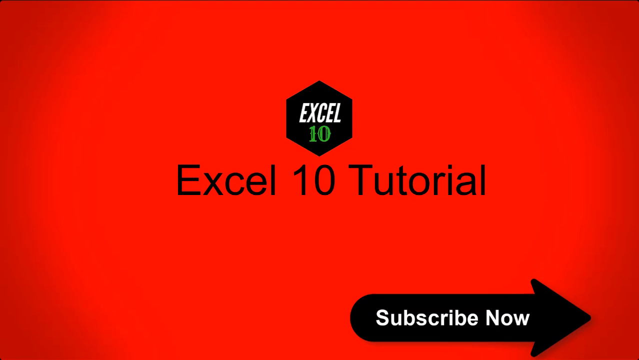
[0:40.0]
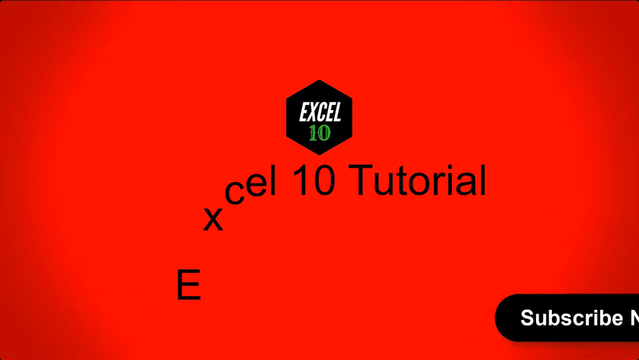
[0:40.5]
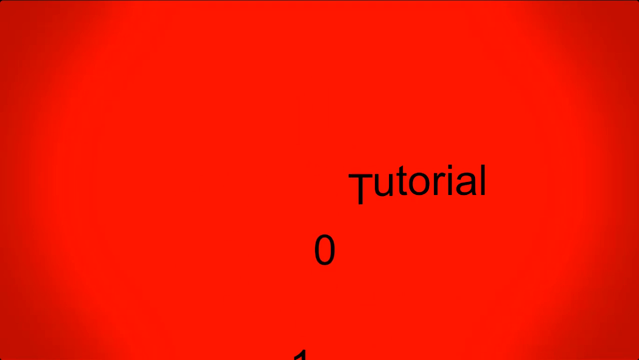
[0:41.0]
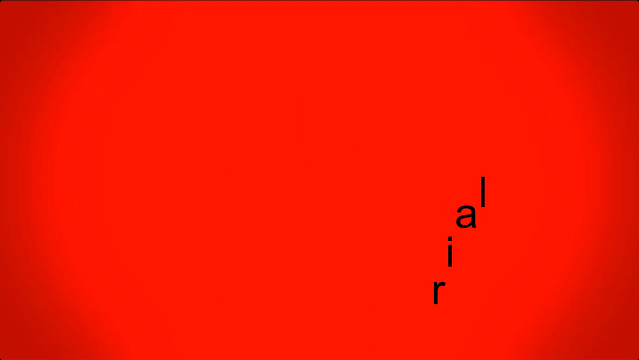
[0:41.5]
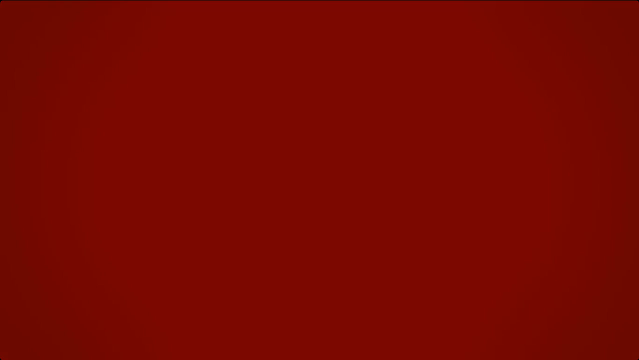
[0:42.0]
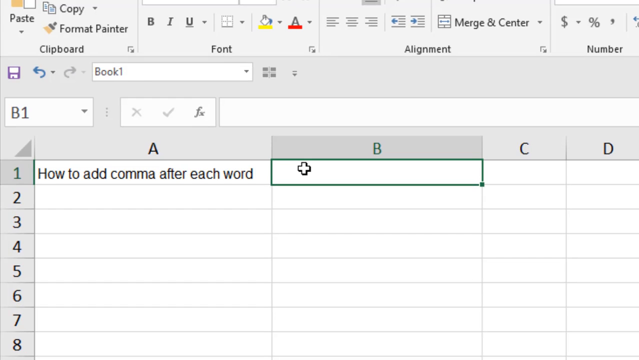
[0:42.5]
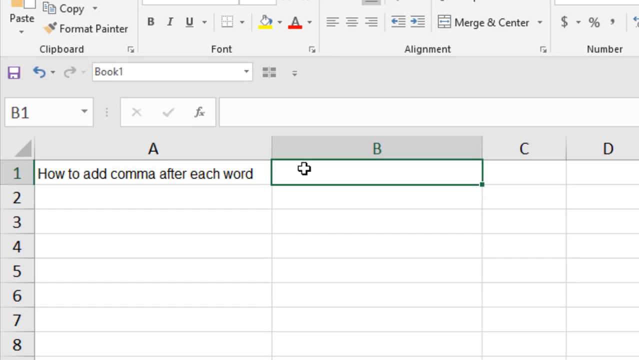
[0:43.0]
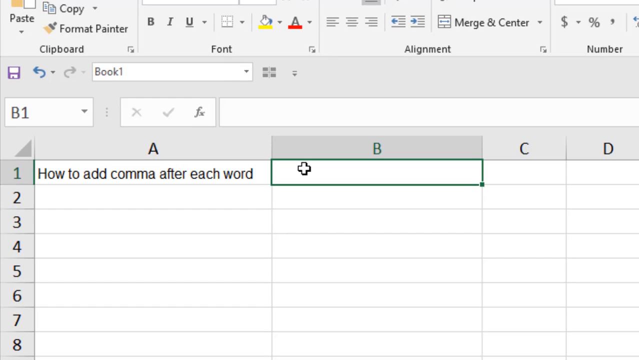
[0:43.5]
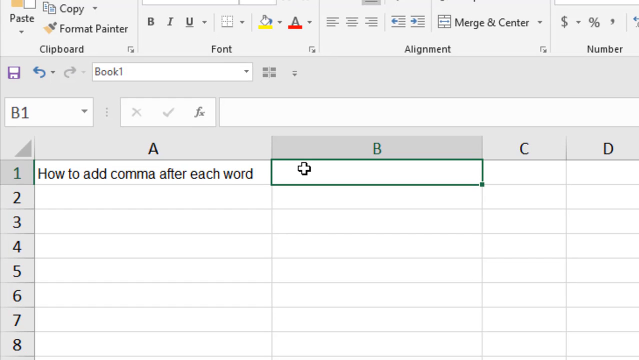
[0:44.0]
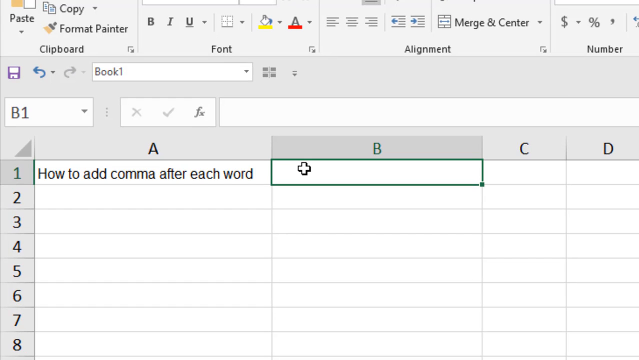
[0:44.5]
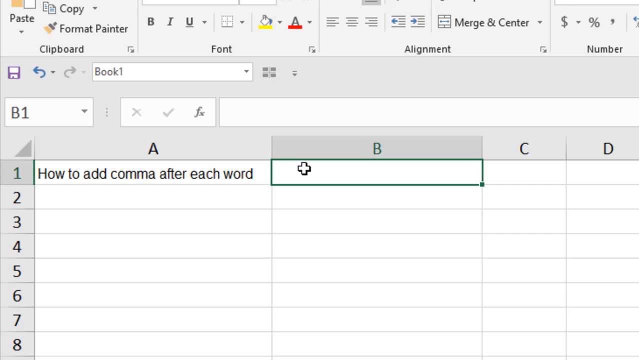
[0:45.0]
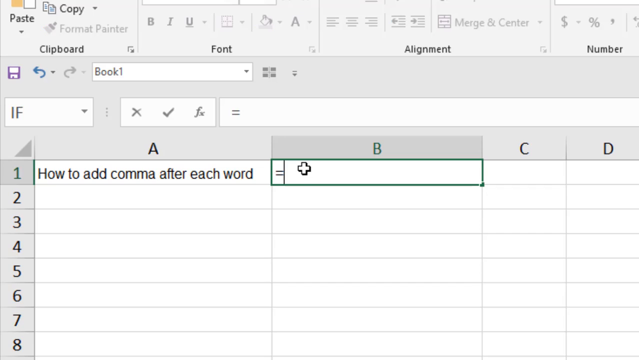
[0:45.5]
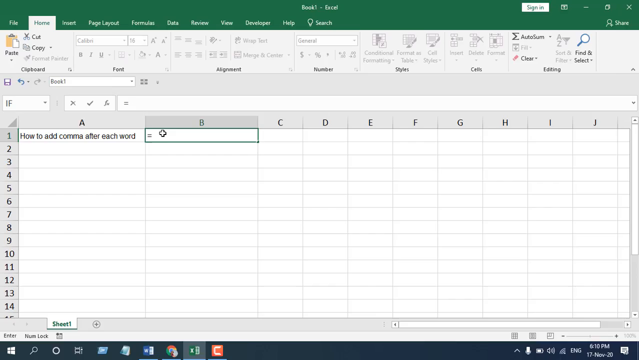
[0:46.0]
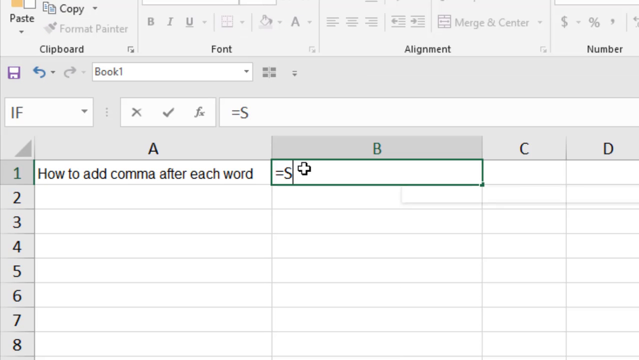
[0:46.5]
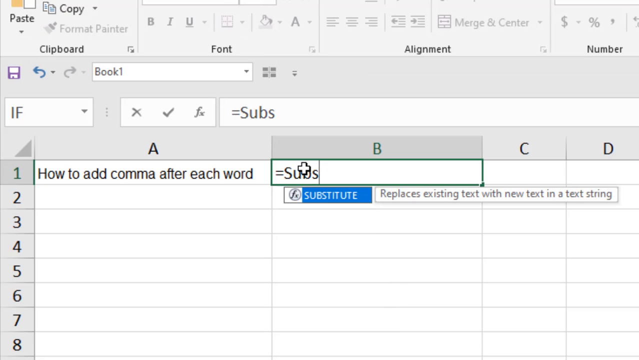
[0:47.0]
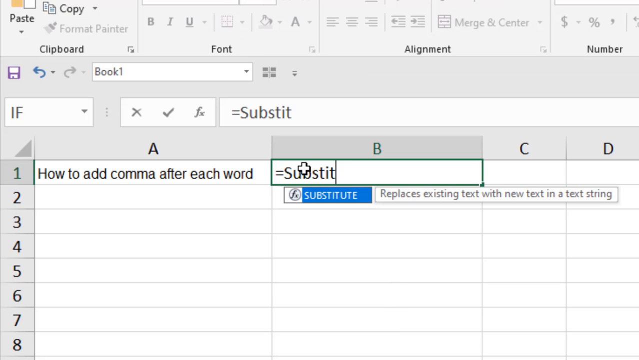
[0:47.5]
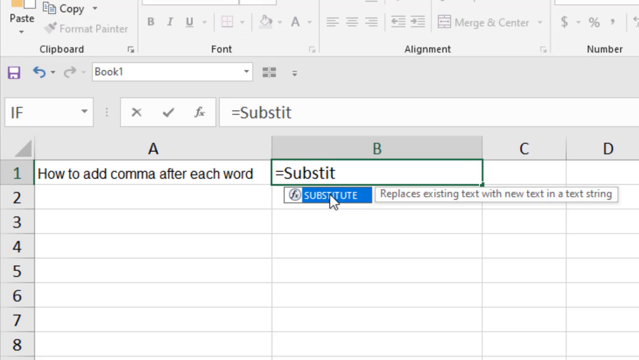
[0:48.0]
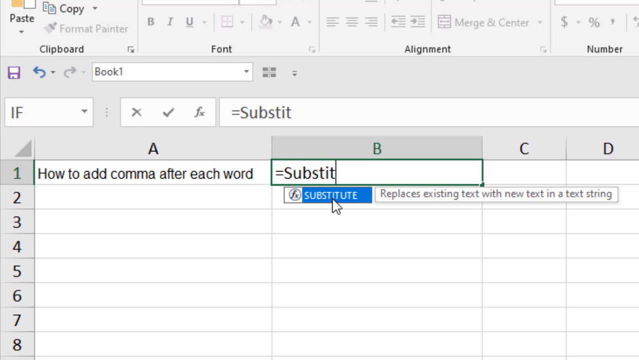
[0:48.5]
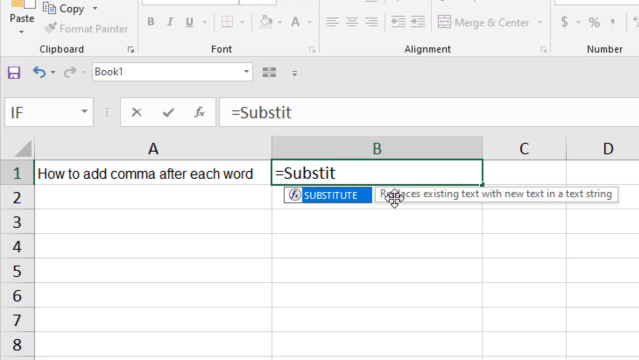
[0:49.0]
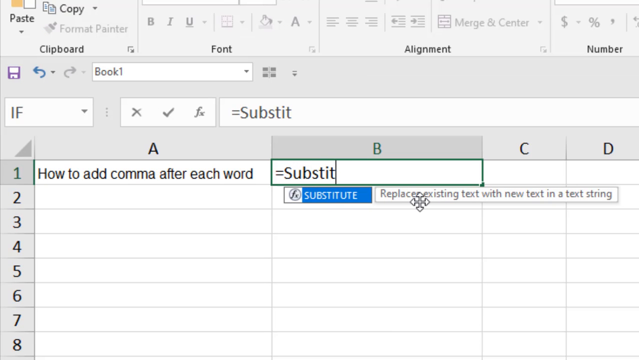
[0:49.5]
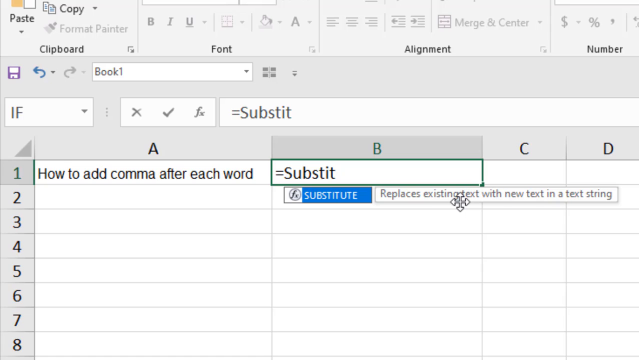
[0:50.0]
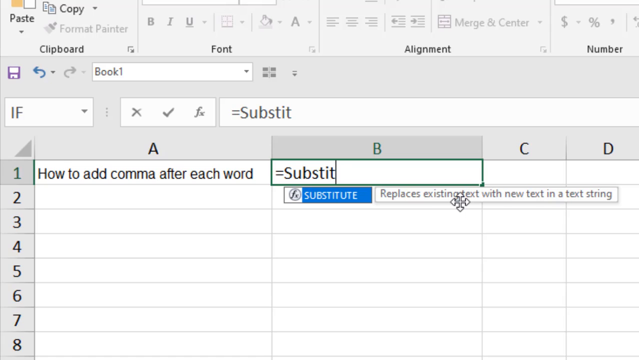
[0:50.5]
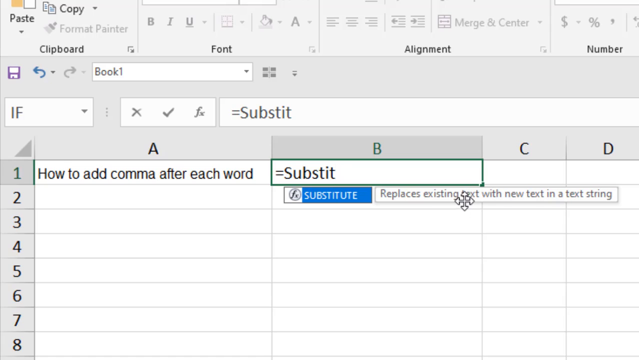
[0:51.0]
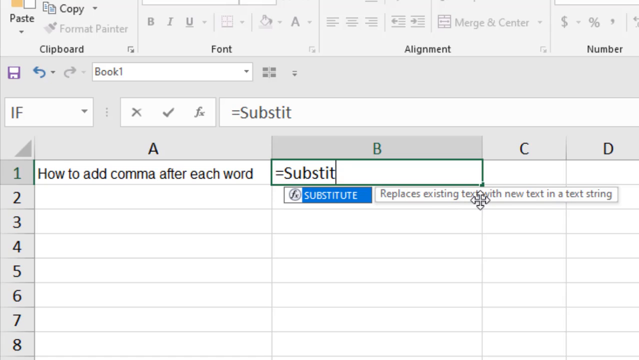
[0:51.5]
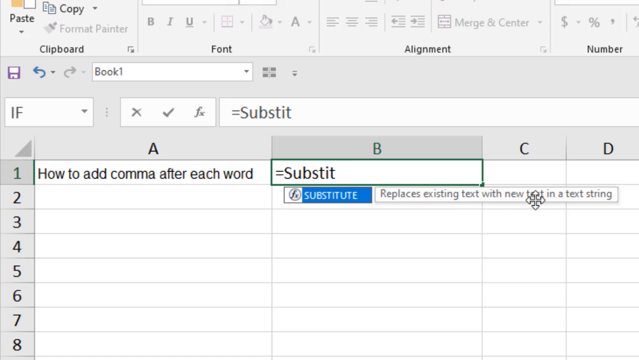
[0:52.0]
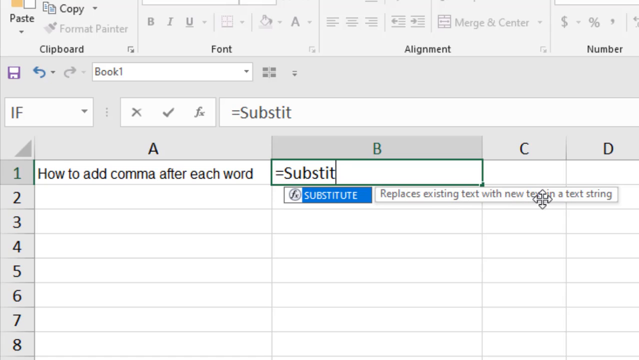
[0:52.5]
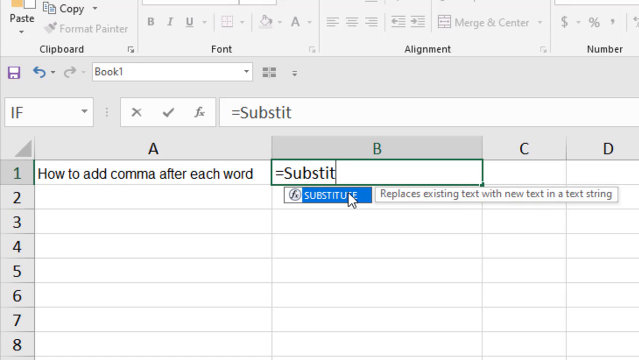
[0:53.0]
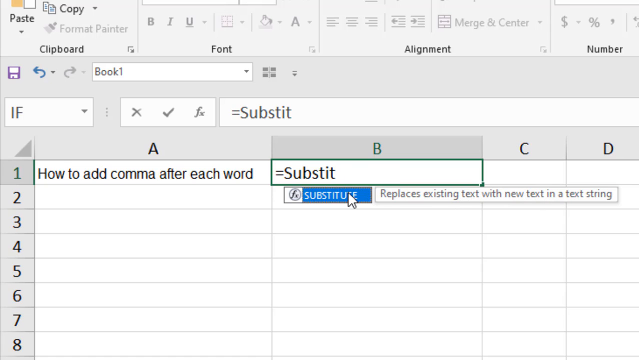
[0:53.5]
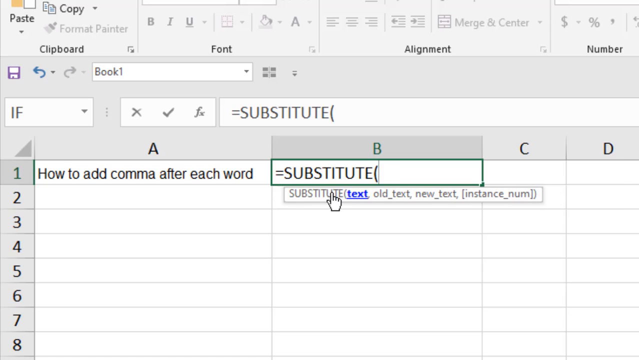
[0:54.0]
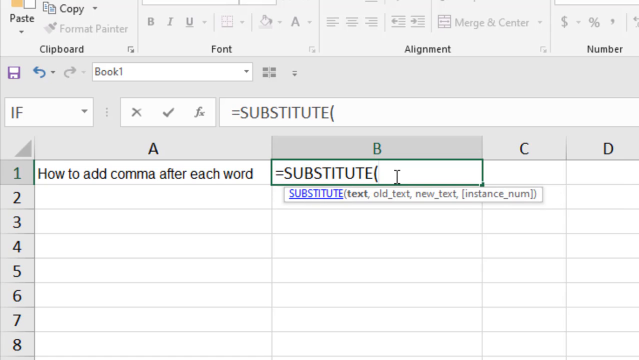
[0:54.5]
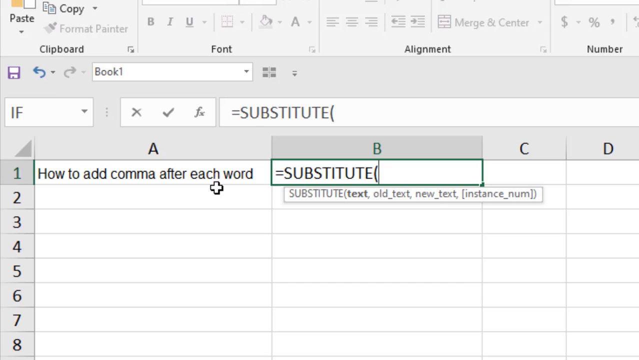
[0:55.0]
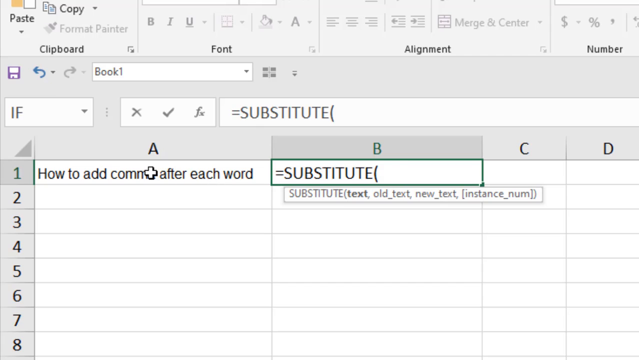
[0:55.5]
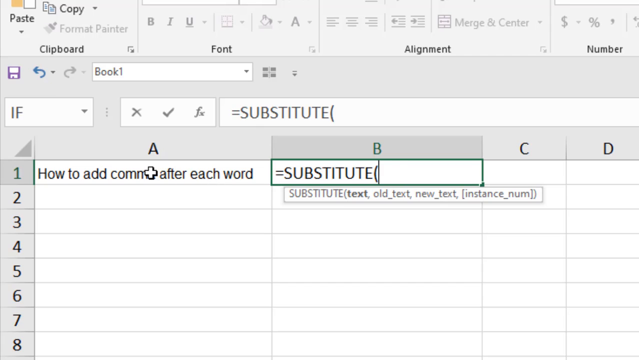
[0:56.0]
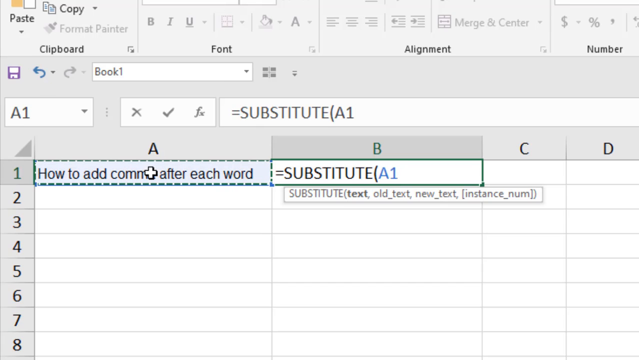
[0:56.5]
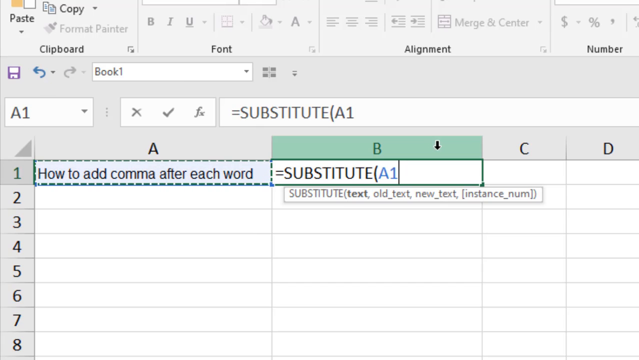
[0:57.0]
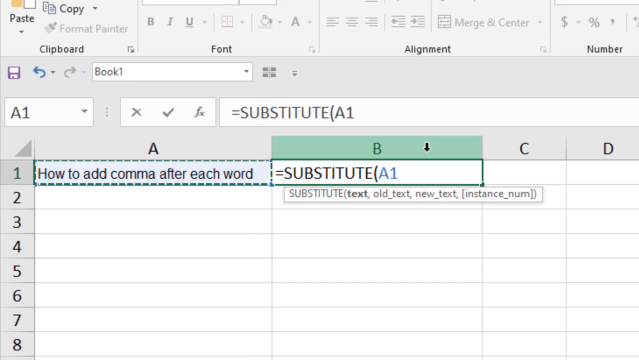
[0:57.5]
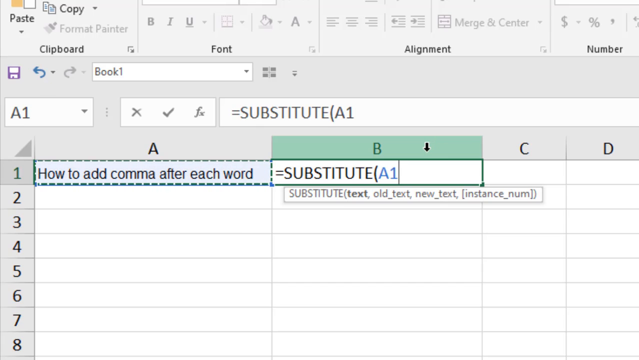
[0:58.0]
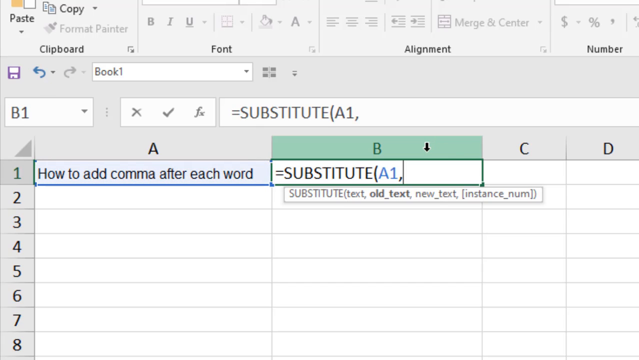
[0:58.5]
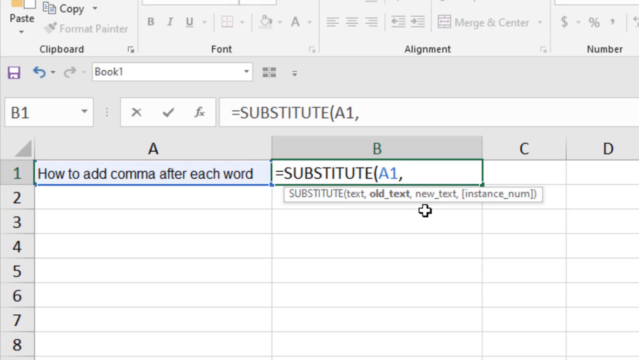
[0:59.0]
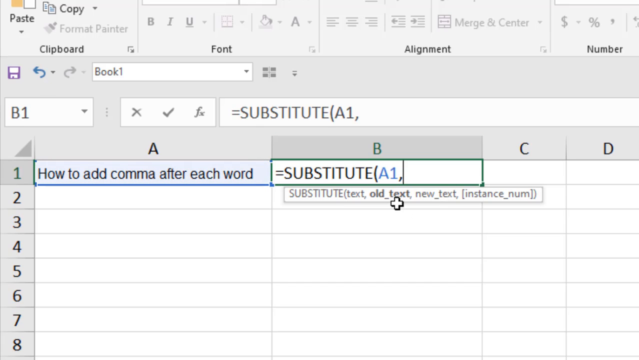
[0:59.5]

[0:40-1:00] A solid red screen appears with a hexagon in the middle that says "Excel 10", with the 10 in green. Underneath, big black writing says "Excel 10 tutorial", and at the very bottom "subscribe now" appears in white writing with what looks to be a black arrow. Red in the background is the only color on the page apart from the green. Everything then falls off the screen one letter at a time, returning to a close-up of the Excel spreadsheet, now in column B, where the person types "=substitute(A1)".